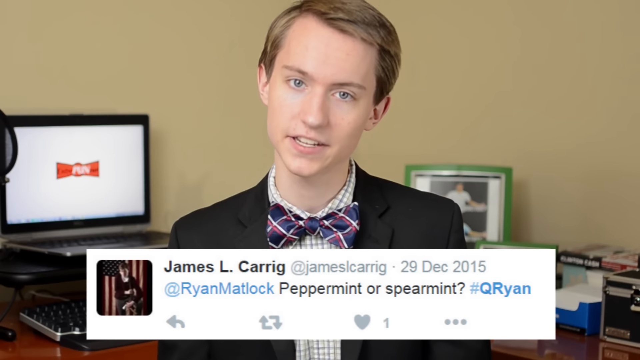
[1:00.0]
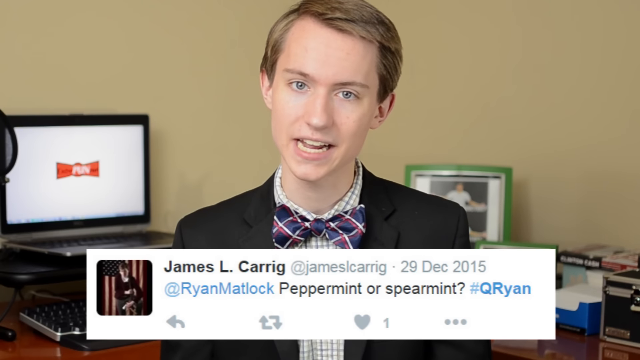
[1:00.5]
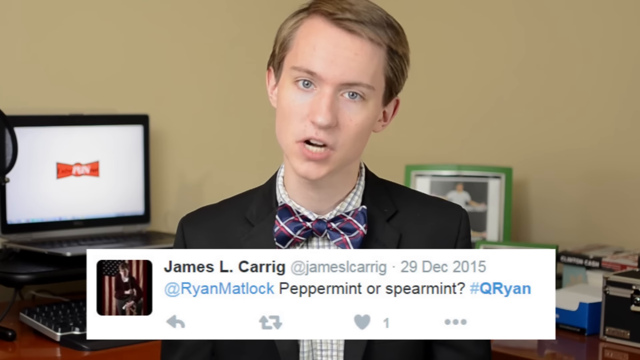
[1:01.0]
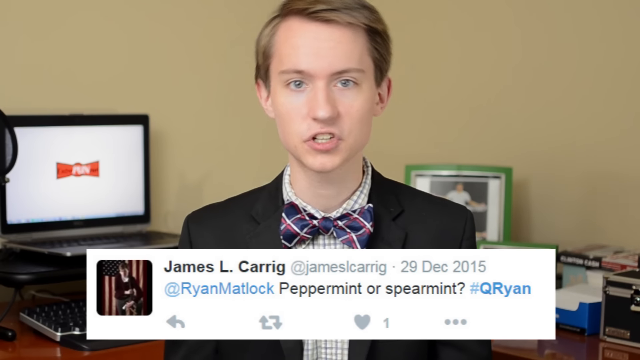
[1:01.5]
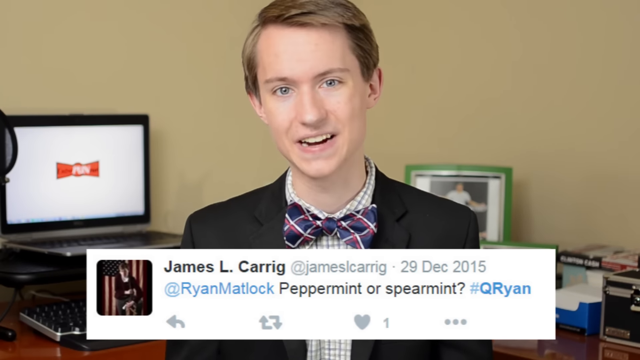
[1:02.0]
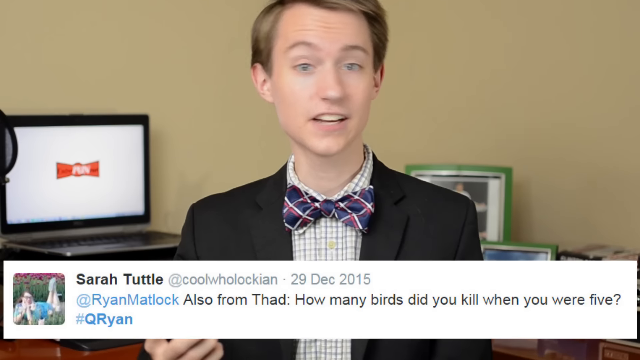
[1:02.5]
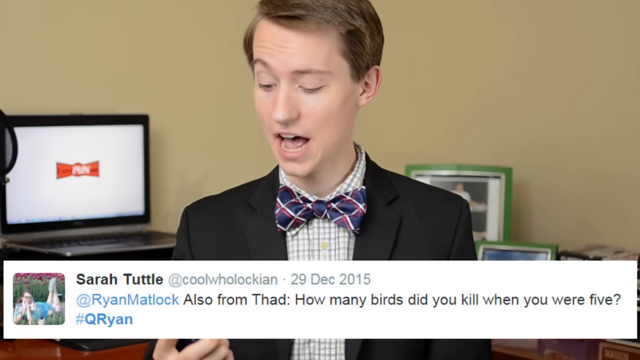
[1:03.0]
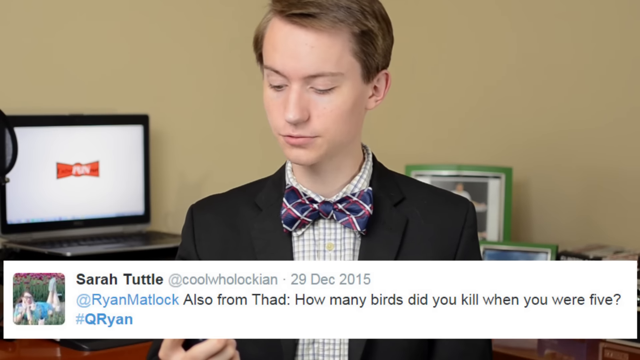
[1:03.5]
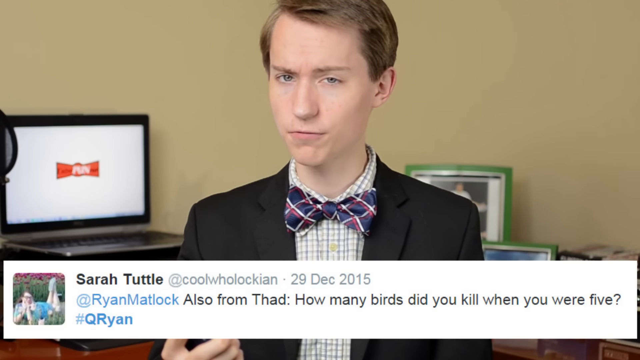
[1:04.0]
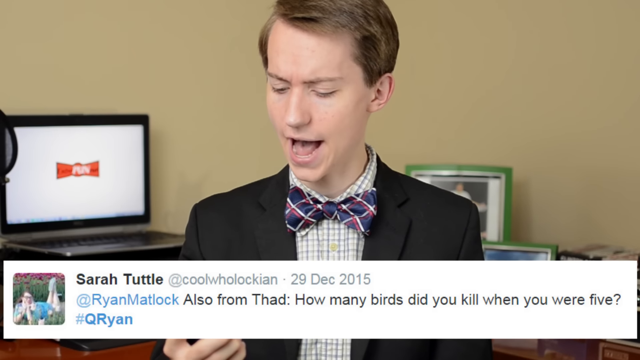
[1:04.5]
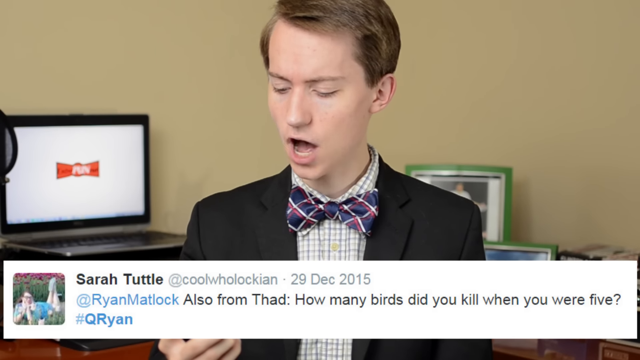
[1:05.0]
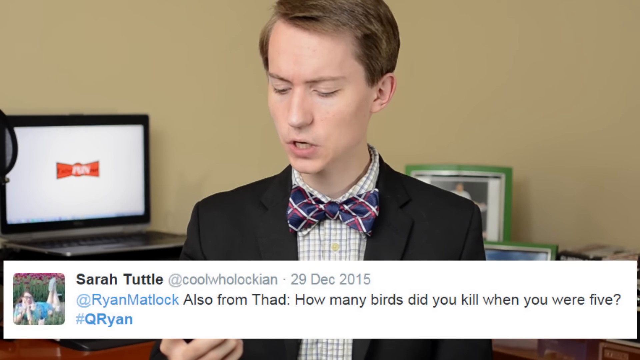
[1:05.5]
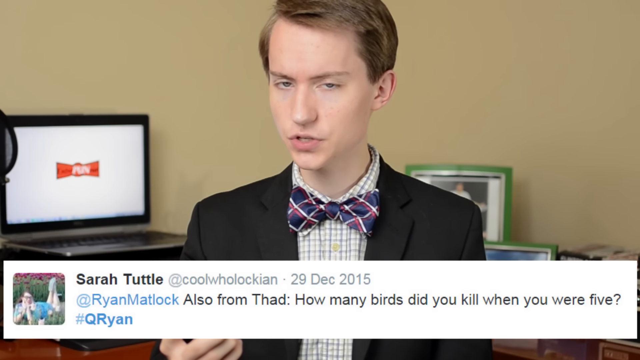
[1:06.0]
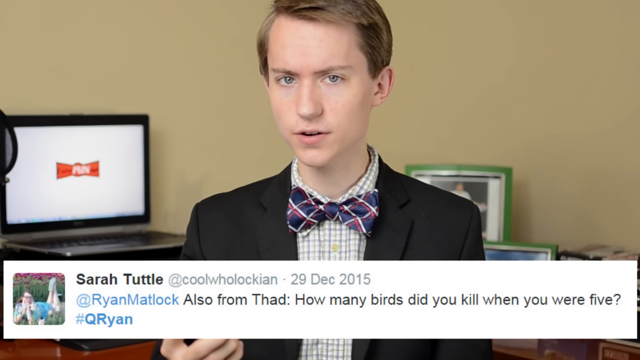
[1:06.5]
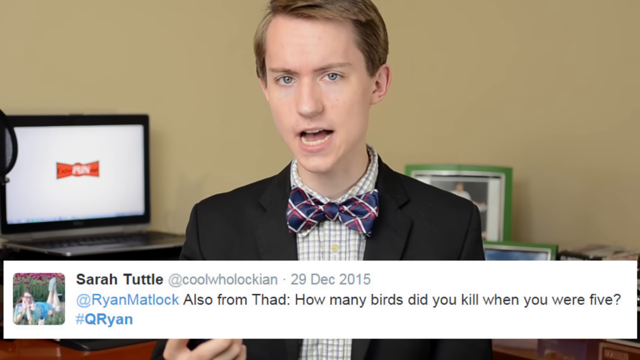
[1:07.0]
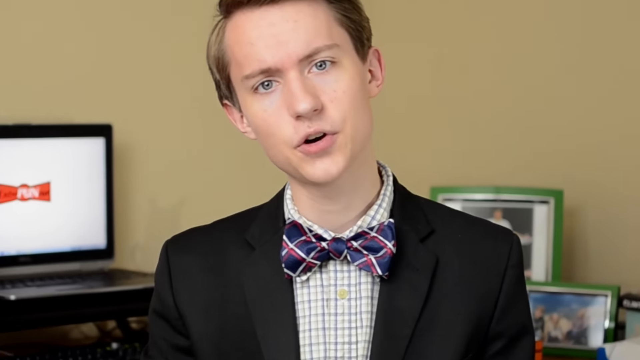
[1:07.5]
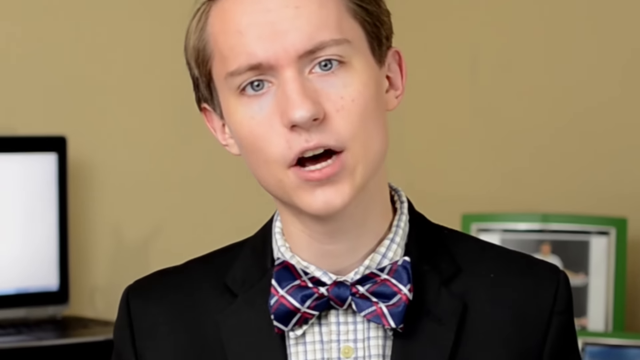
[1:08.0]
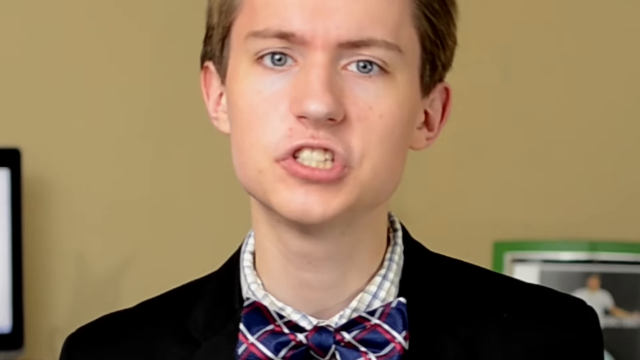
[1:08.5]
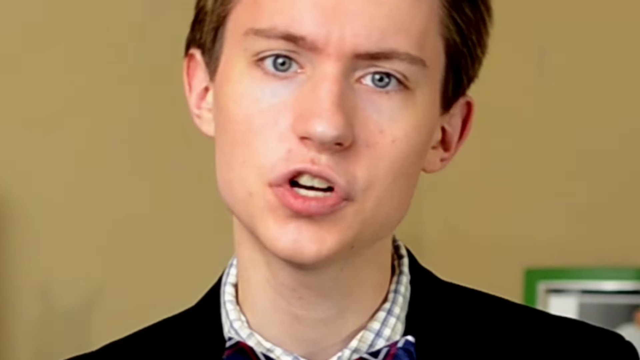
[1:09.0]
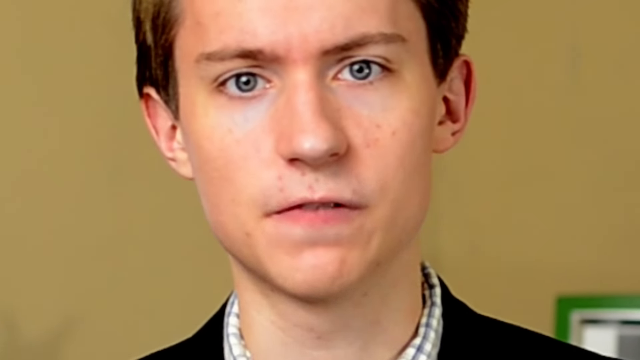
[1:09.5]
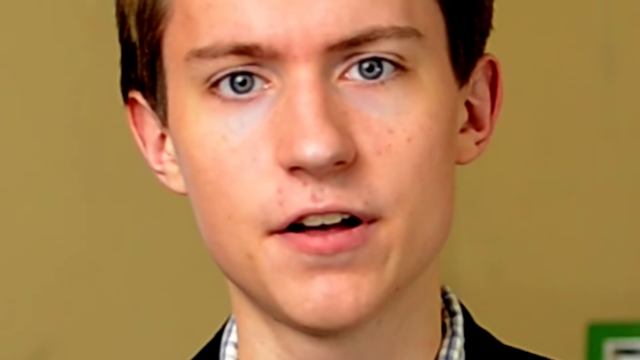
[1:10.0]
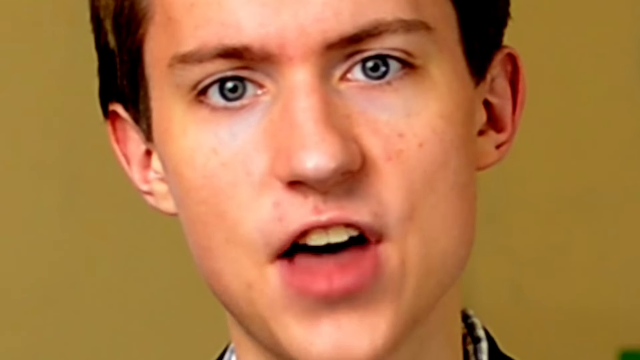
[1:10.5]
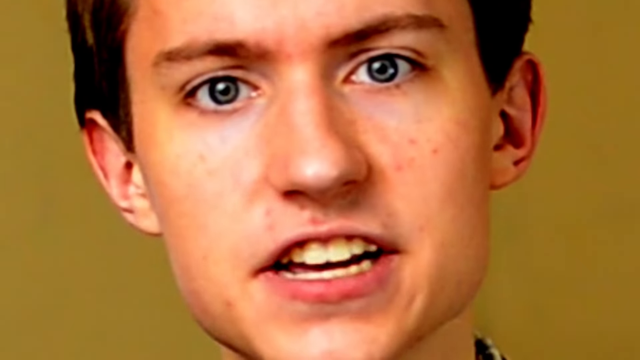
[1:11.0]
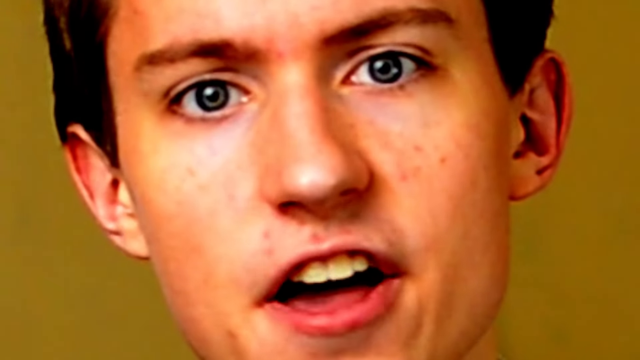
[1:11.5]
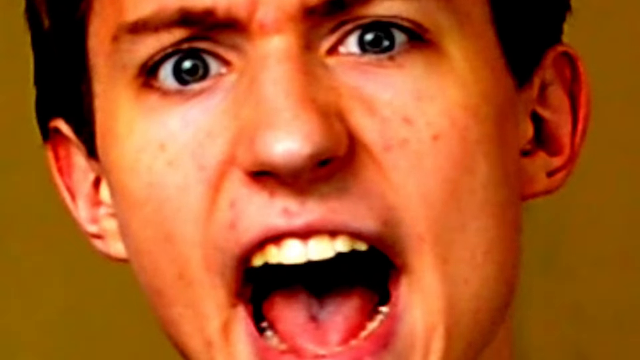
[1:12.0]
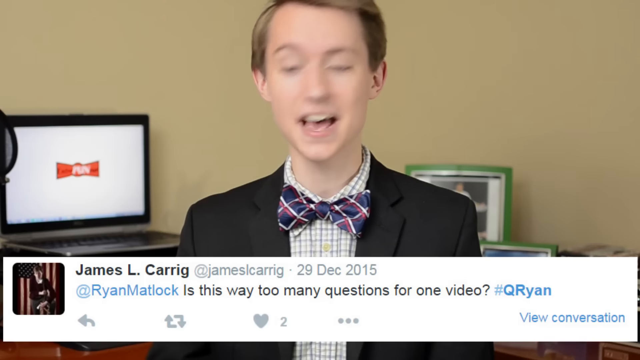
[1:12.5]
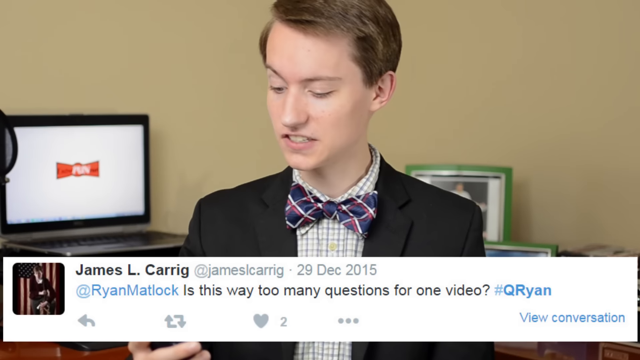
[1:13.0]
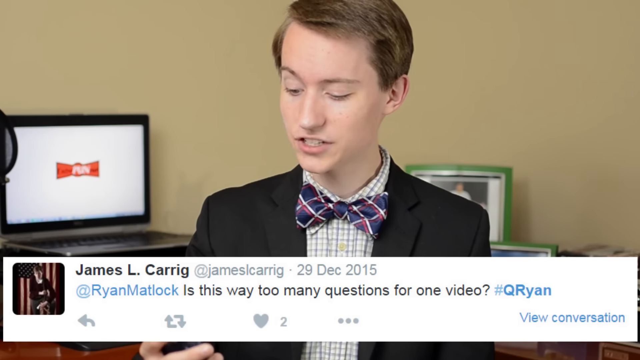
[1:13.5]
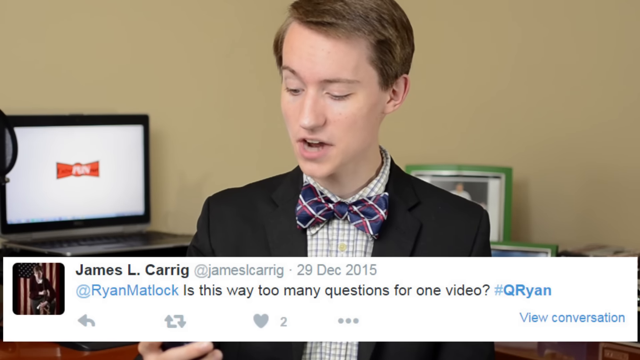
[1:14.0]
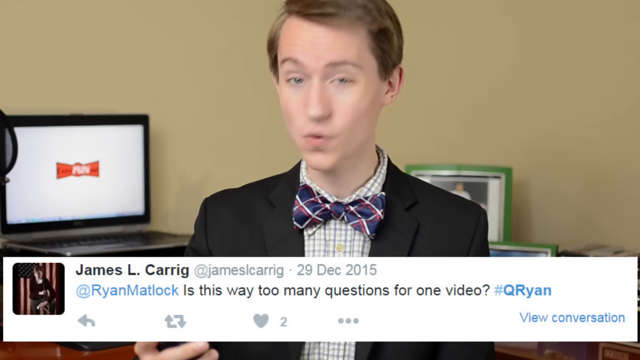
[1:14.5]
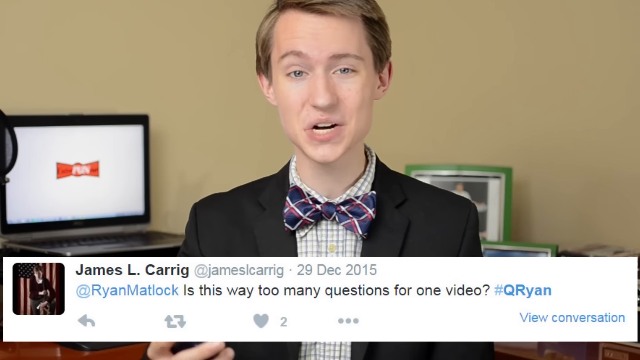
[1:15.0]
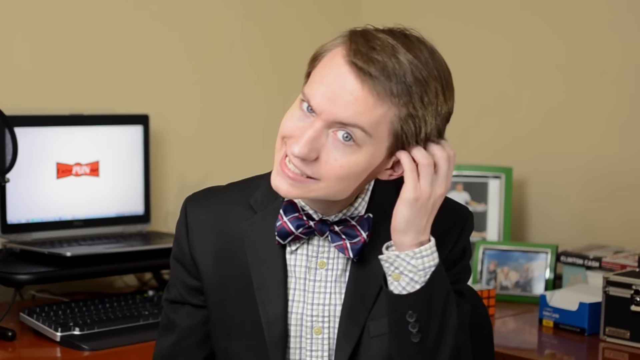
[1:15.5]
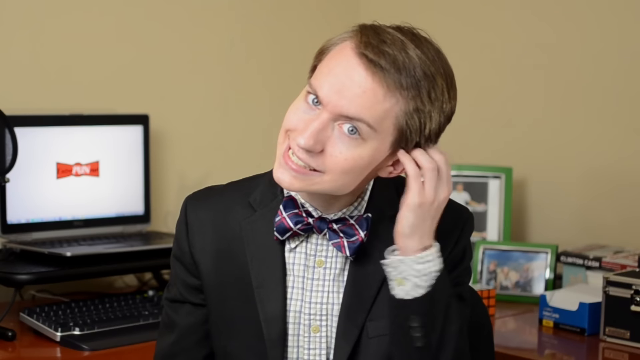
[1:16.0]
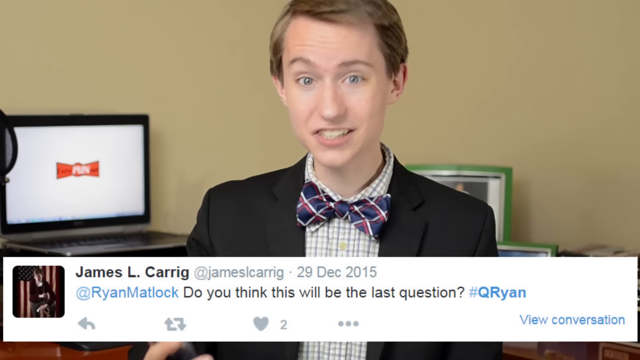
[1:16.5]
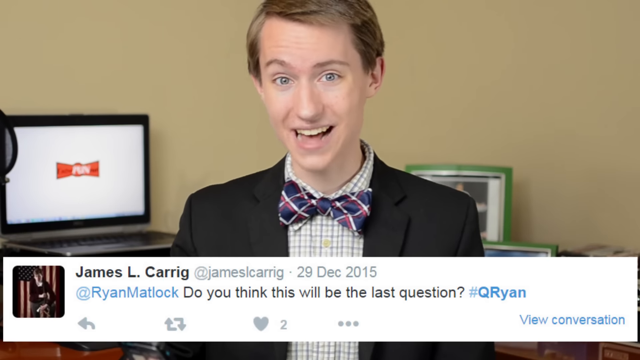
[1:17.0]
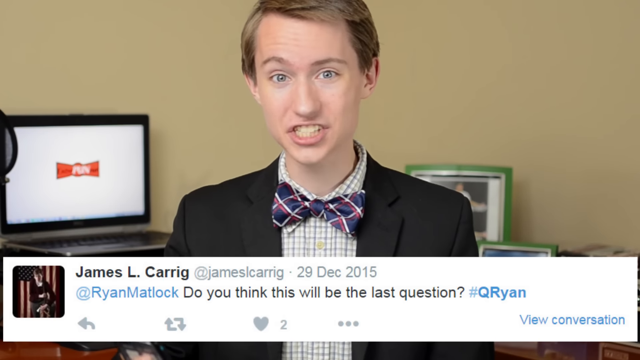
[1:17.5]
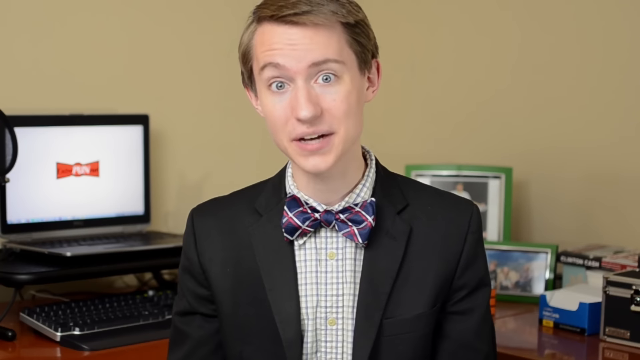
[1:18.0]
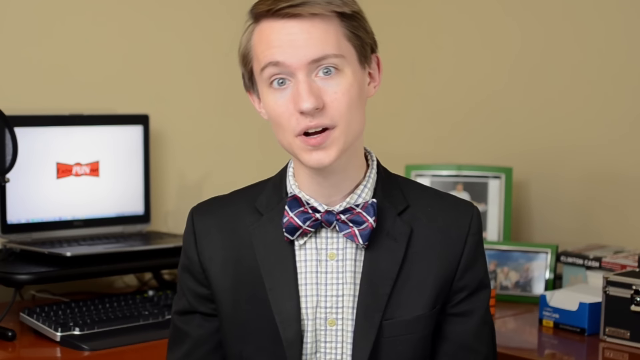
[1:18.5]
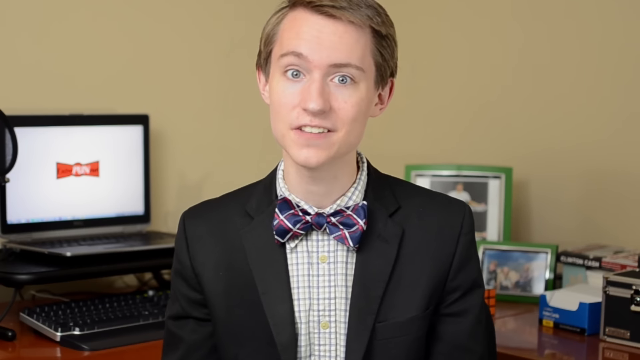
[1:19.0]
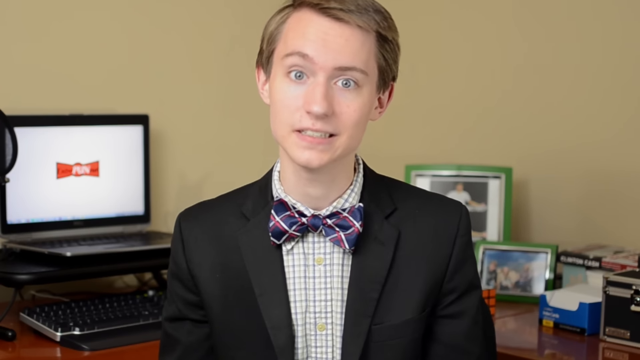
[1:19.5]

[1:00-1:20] The same bedroom-like setting has beige walls, a laptop to the middle left that is turned on with a white screen, and some portraits in the back behind the man. He is in the direct middle of the frame, wearing a black jacket and a dark blue bow tie with white and red stripes, with short brown hair combed to the side. Tweets are displayed at the bottom in a red or white rectangular box. The current tweet is from James Carrig, asking Ryan Matlock, the person in the video, "peppermint or spearmint?" The man stares directly at the camera, then looks down to the bottom left while holding his phone in his right hand. Another message appears in the same white box, from Sarah Tuttle: "how many birds did you kill when you were five?" He looks down and reads it, then looks back at the camera, which zooms in on his face very slowly as the image becomes a little more contrasty before returning to its original look. Another question appears from James Carrig: "is this way too many questions for one video?" The man looks down to the bottom left again, holding his phone in his right hand.